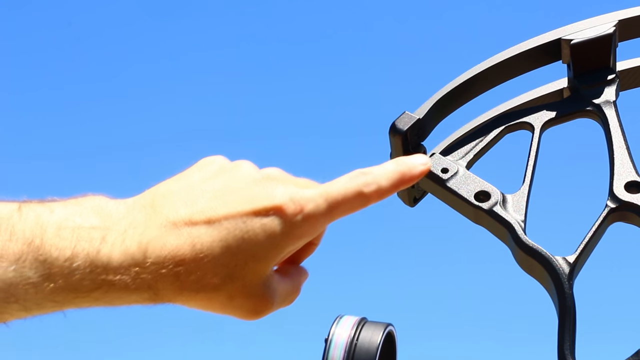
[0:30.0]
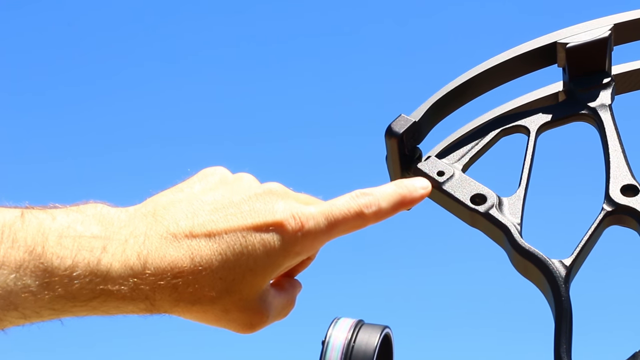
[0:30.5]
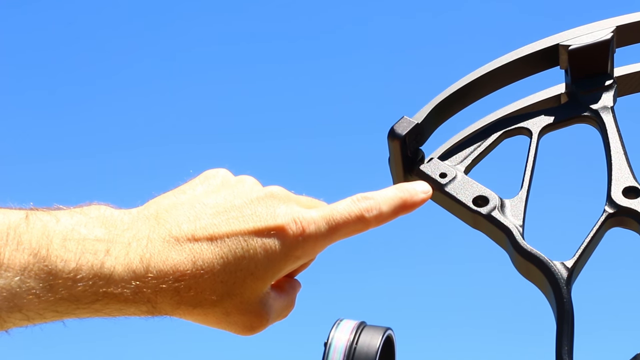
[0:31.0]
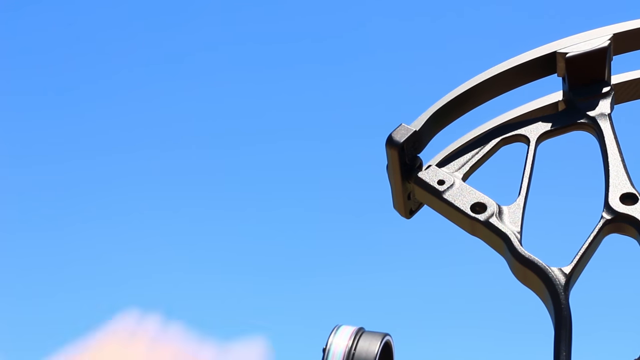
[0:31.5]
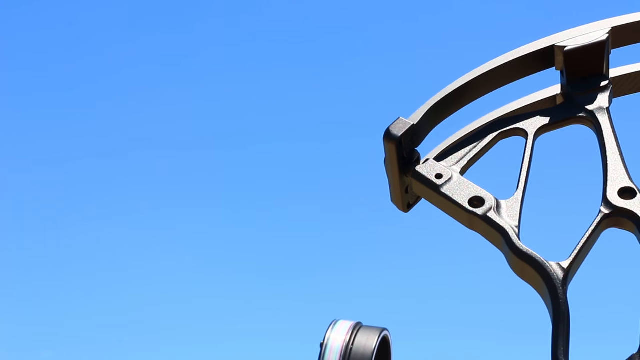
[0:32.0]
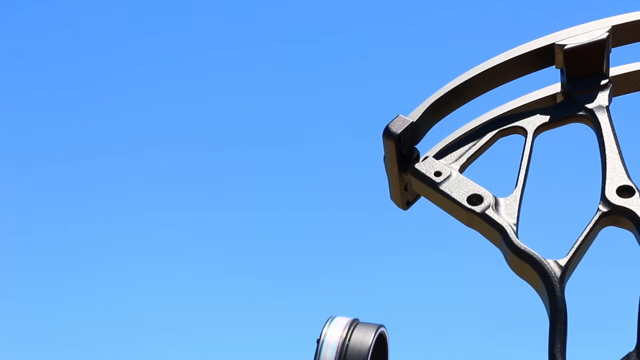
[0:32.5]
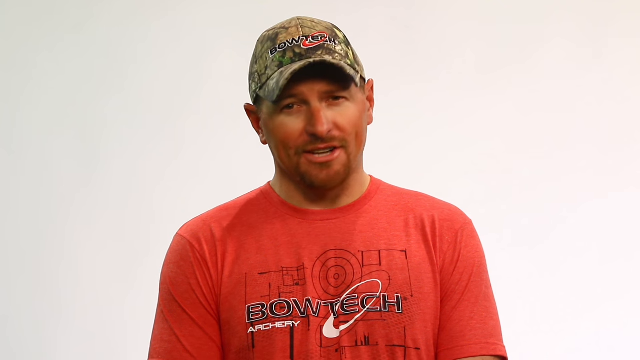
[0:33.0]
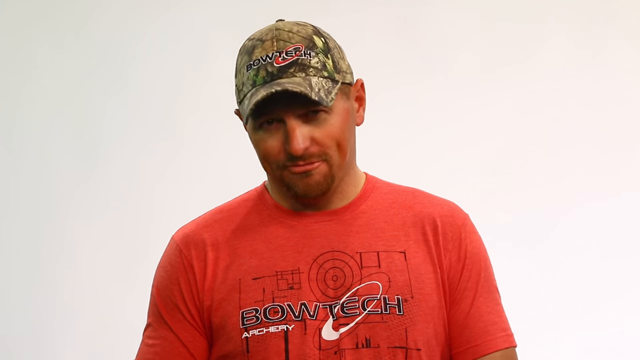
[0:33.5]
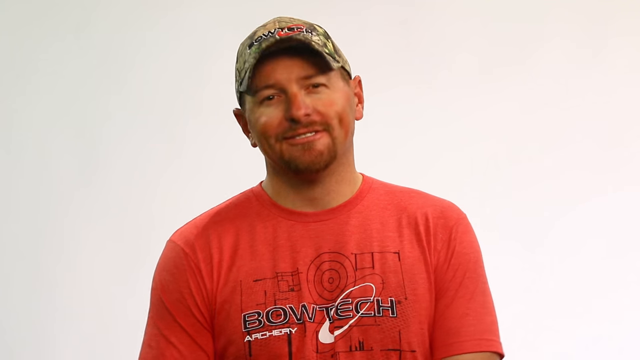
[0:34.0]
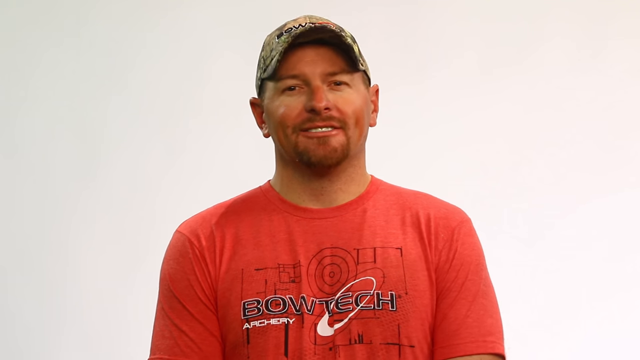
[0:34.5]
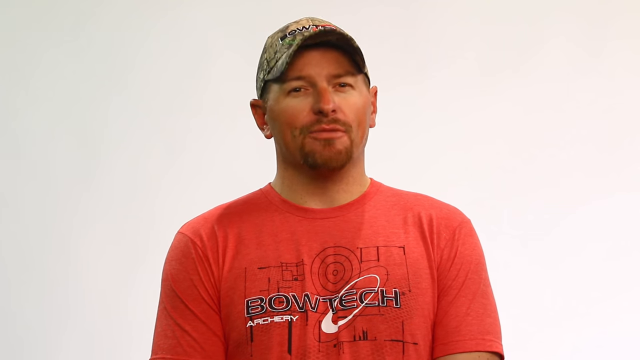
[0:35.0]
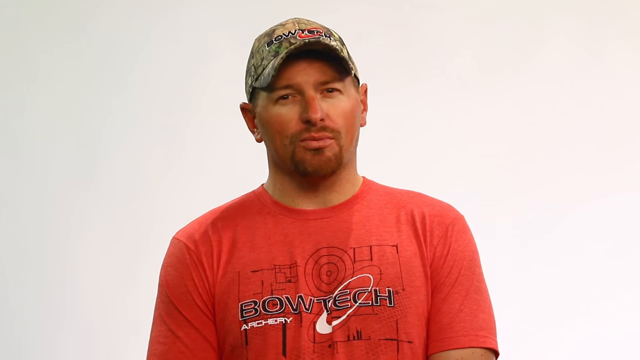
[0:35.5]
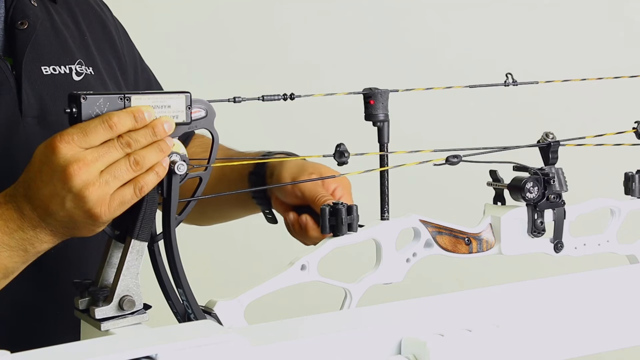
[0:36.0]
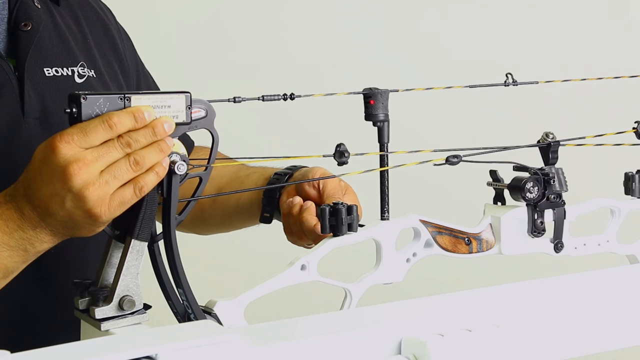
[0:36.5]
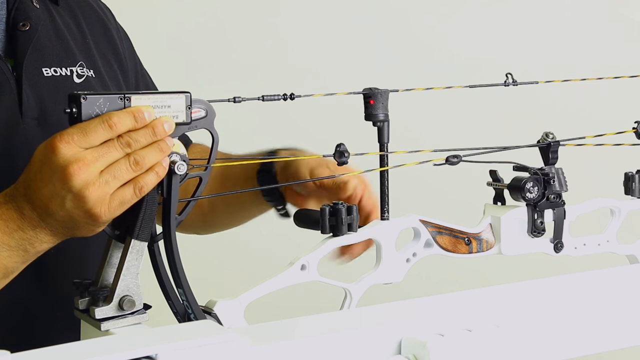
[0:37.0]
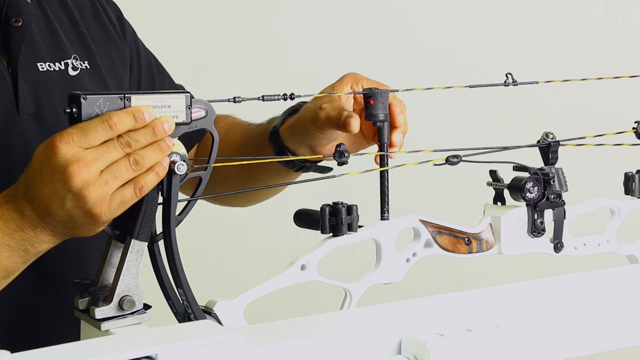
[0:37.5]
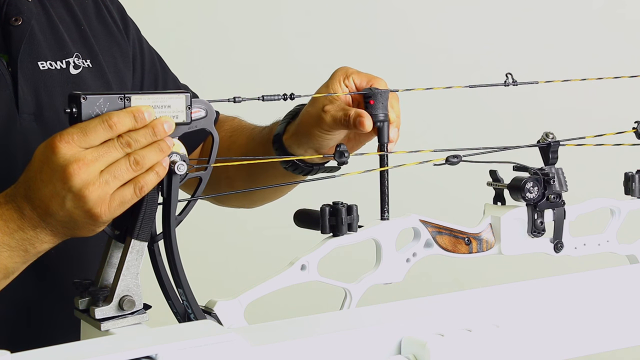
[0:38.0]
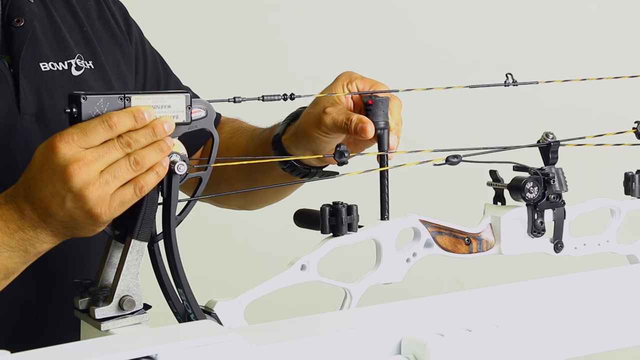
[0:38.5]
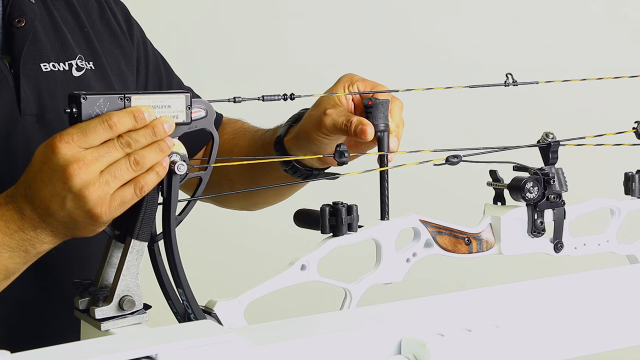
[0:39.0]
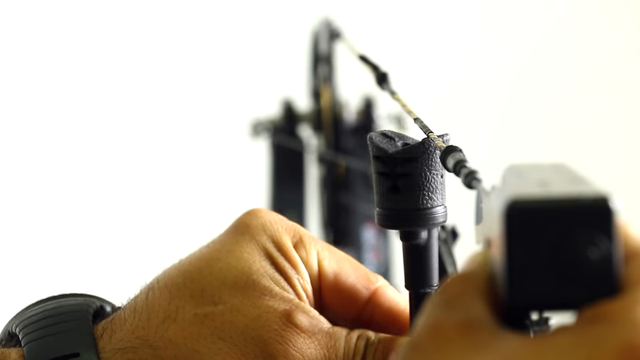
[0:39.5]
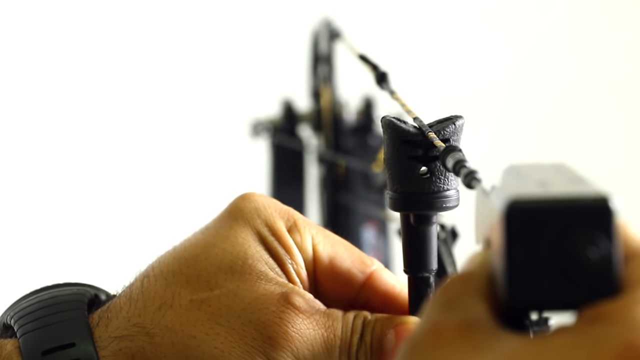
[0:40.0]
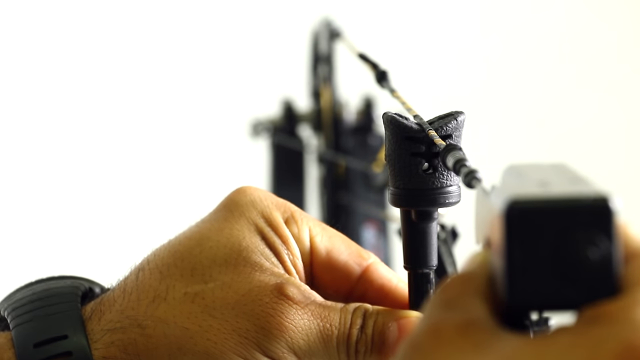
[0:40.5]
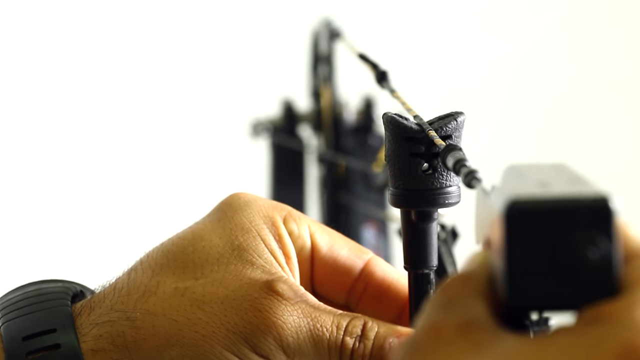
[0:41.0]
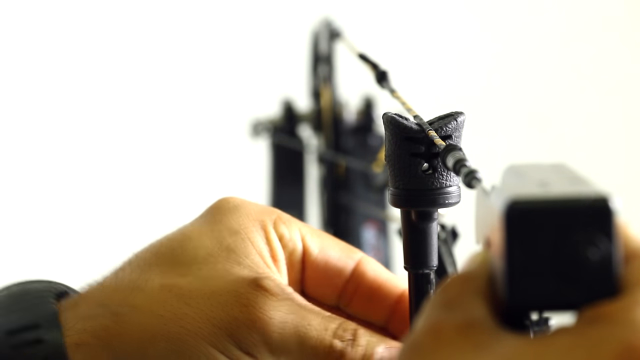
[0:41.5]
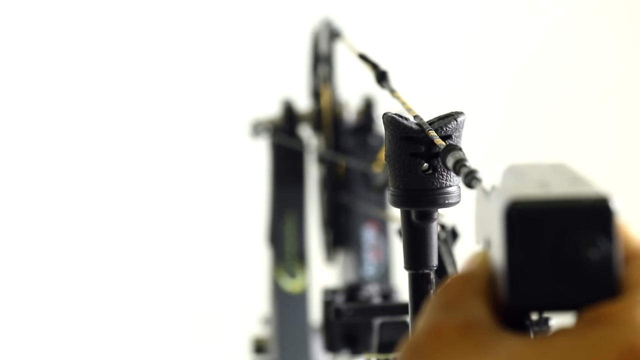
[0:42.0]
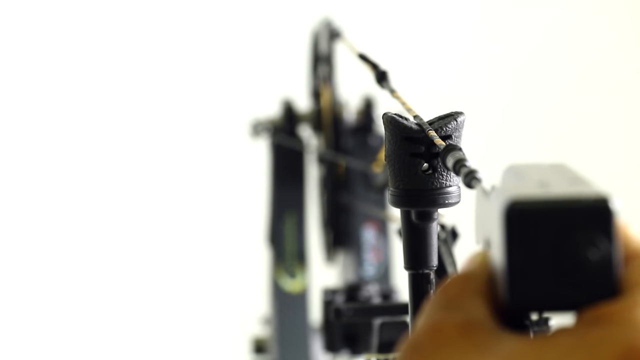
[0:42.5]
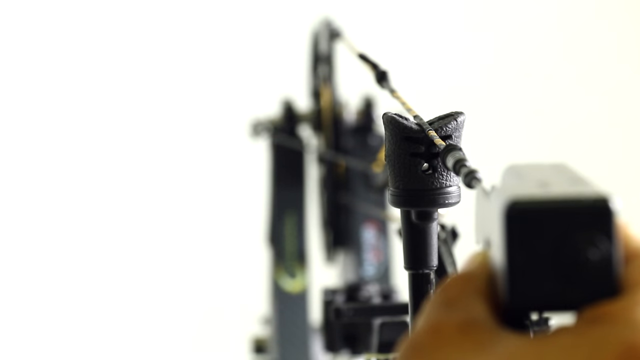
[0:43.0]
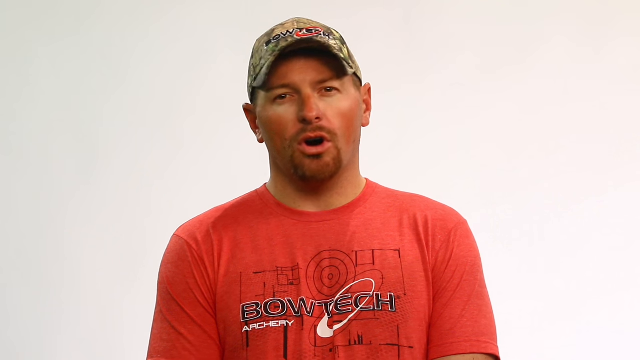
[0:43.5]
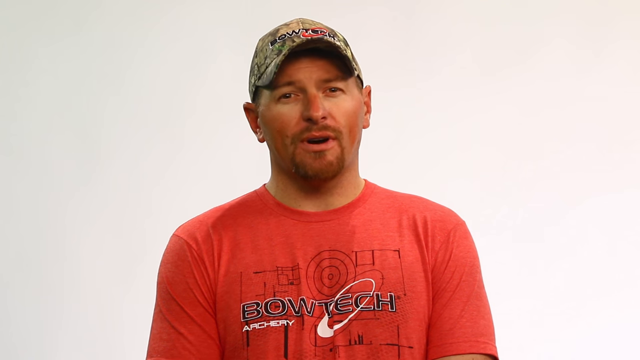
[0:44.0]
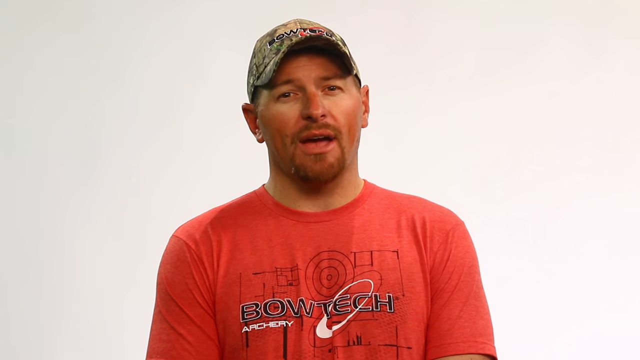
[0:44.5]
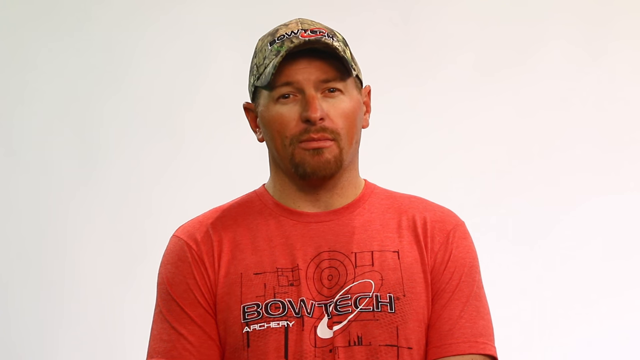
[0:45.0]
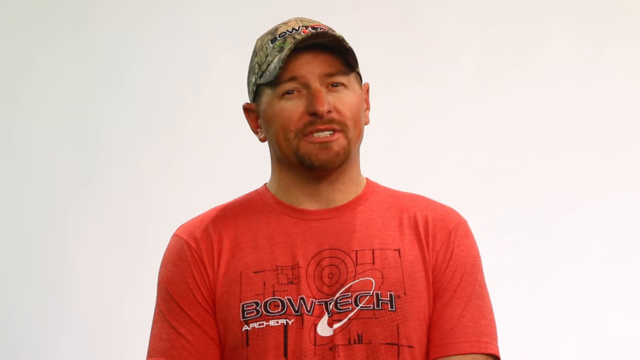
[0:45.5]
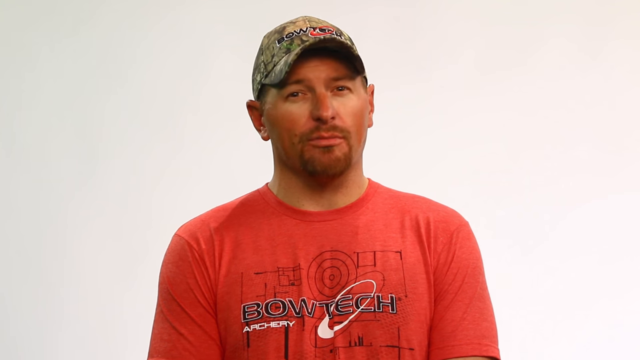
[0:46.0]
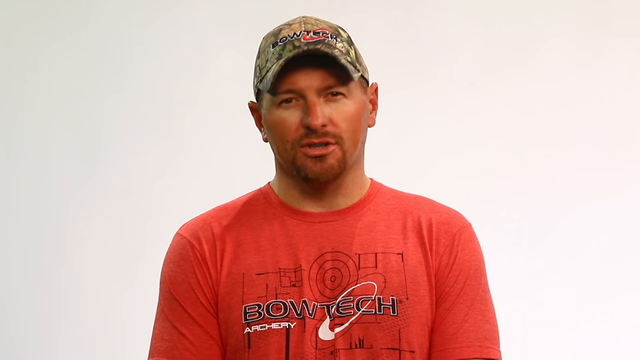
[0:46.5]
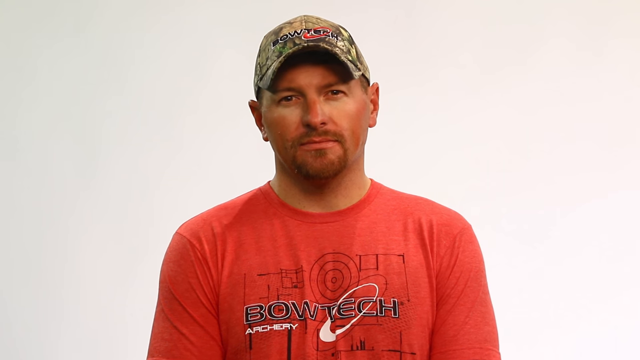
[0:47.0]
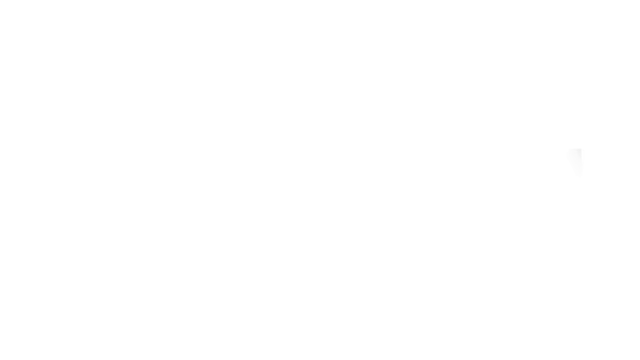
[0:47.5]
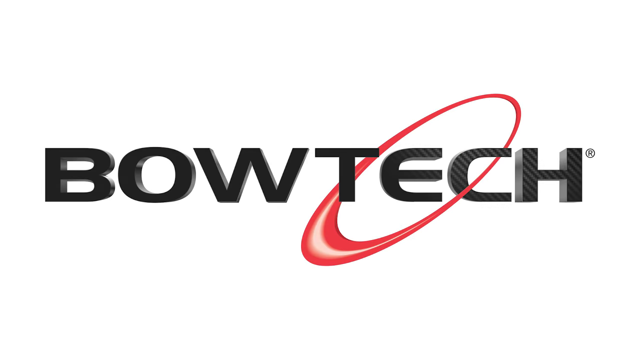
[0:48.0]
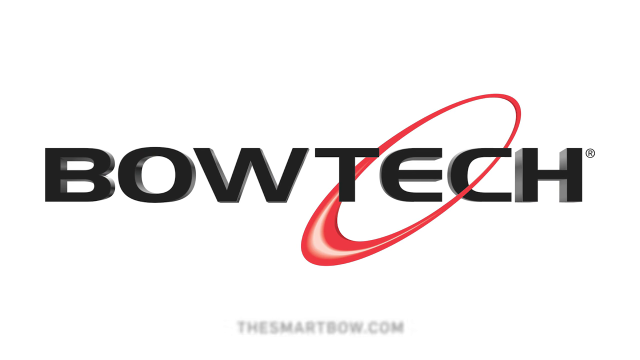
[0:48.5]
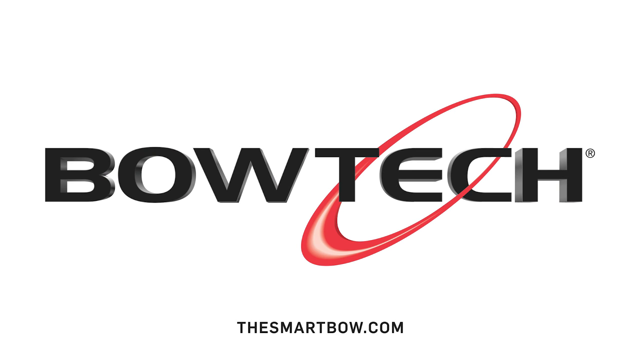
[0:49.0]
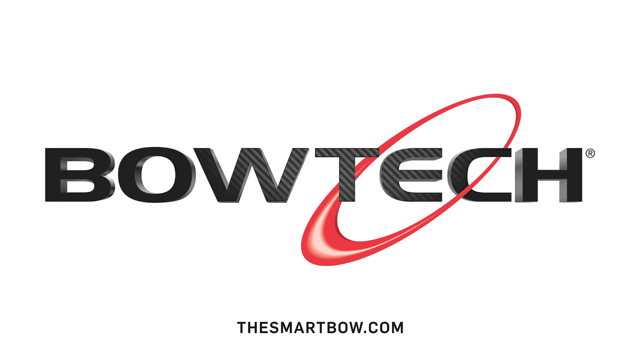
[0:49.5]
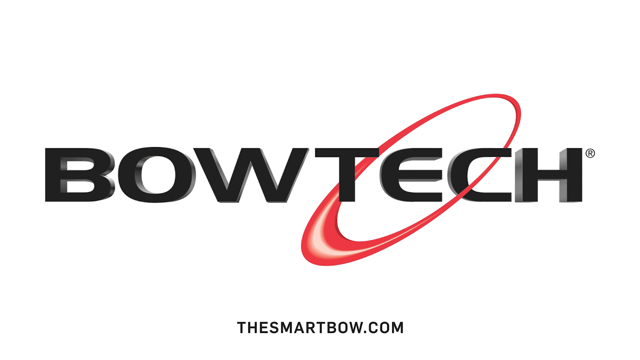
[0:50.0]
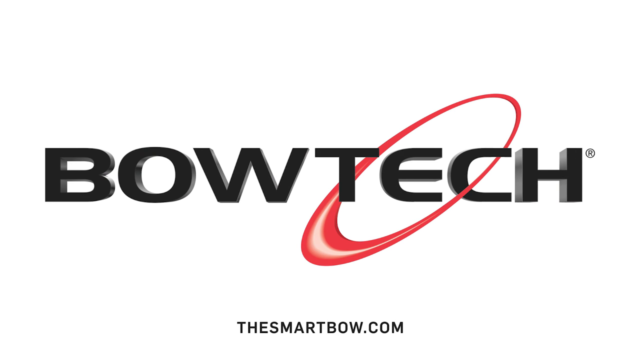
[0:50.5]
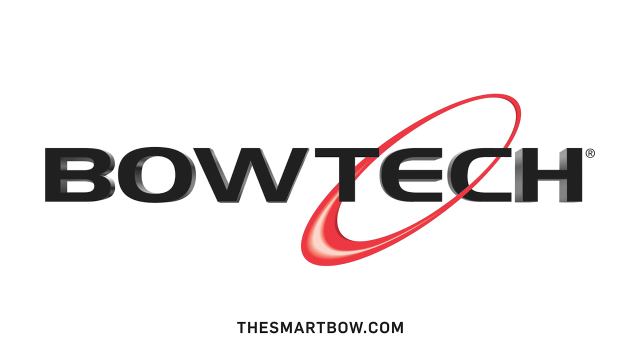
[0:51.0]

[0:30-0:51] What looks like the front of an archery bow is on the right side of the frame, with its front side facing left. A left hand comes in from the left side and points its index finger at the top front of the bow, then at one of the holes in the front ends of the bow. The video then cuts back to what looks like a man talking to the camera. He is Caucasian and wears a camouflage hunter's hat with "Bowtech" on top and a red t-shirt with "Bowtech" across the chest. He stands facing directly toward the camera, talking against a white background, and smiles a little. The video then shows the bow placed on a white table, facing downwards. A right hand coming up from the left side holds the bottom end of the bow where the string is attached, while the left hand, outstretched, touches the middle of the bow and appears to be adjusting something on it. The hands come from a person in a black t-shirt with the Bowtech symbol over the left chest. The left hand adjusts a stick sticking out of the bow, and the view changes from underneath the bow to a view along the string, where the left hand is adjusting what looks like a stick pushed against the string. The video goes back to the man, who talks some more. Finally an outro screen appears with a white background, and the text "Bowtech" in black comes in. A slightly diagonal red circle zooms in from left to right over the "tech" in "Bowtech", and at the bottom a black URL reads "the smartbow.com".